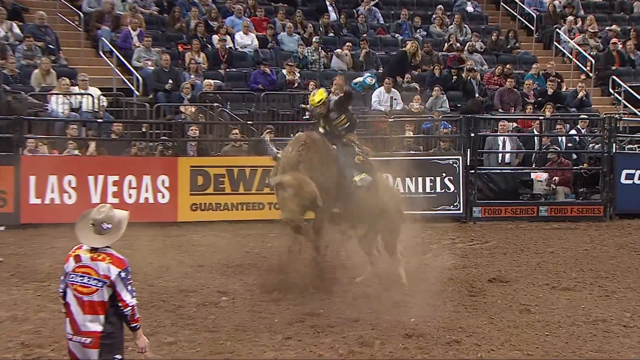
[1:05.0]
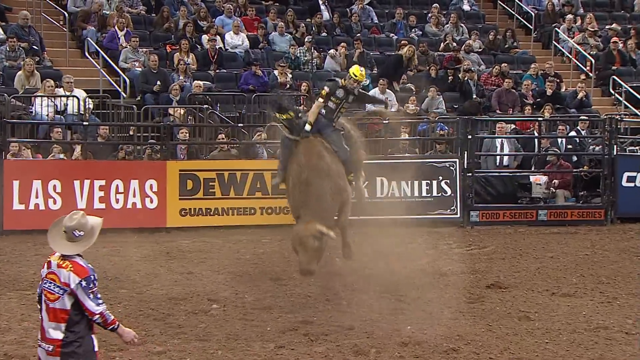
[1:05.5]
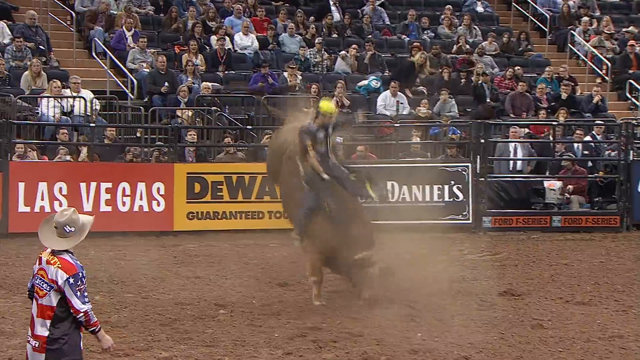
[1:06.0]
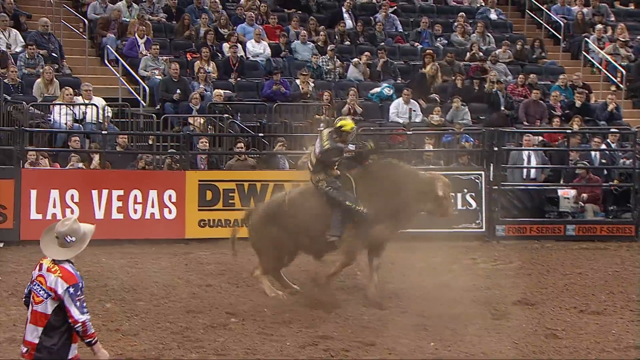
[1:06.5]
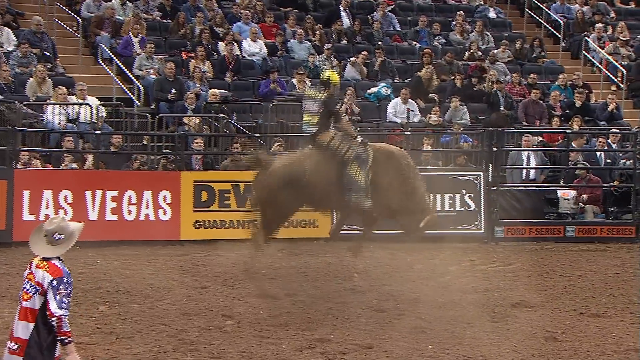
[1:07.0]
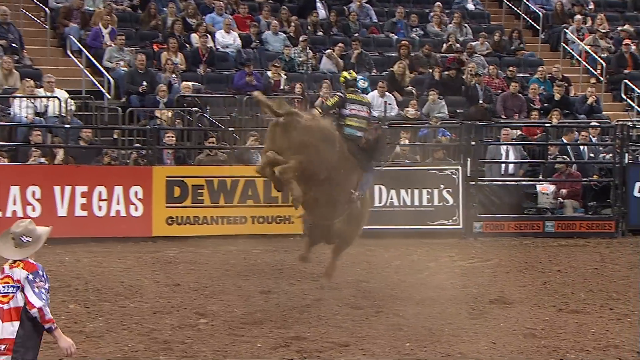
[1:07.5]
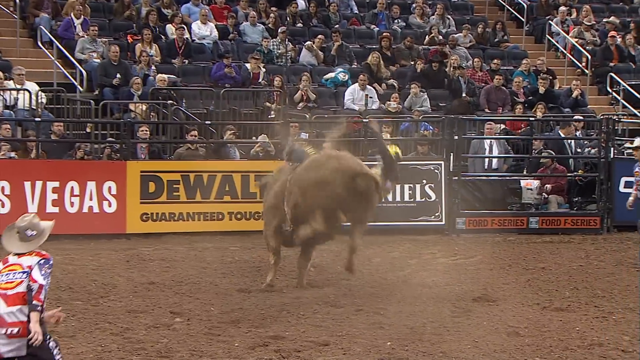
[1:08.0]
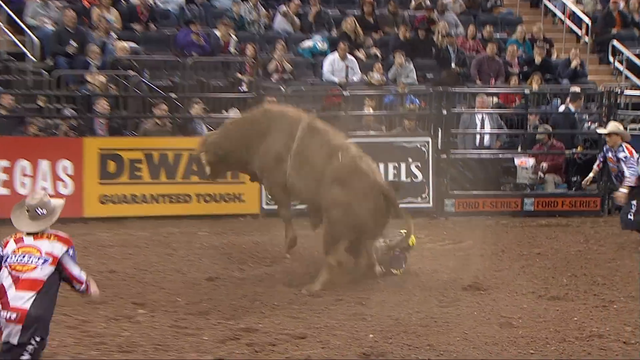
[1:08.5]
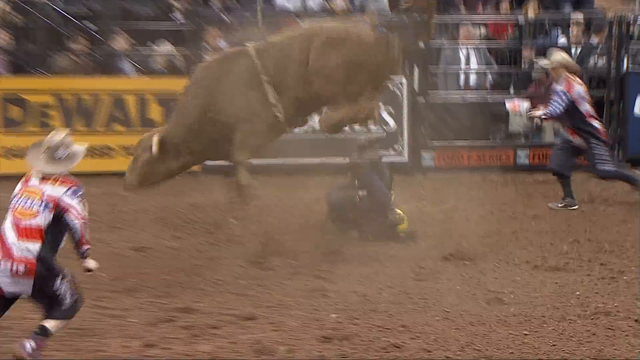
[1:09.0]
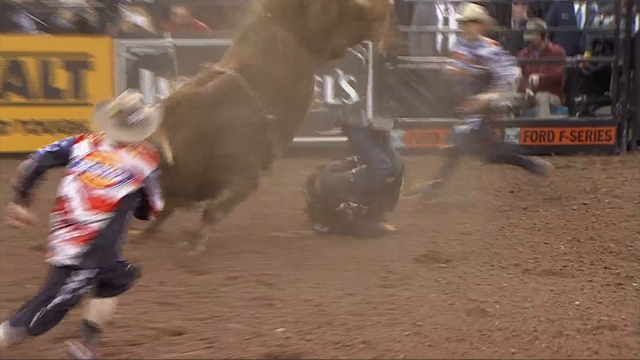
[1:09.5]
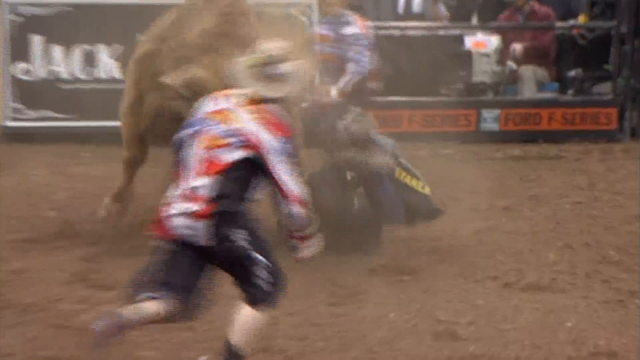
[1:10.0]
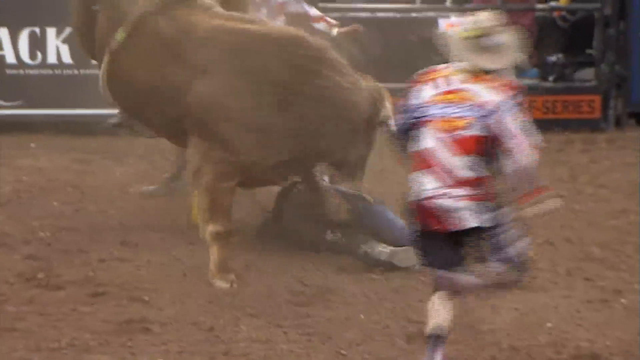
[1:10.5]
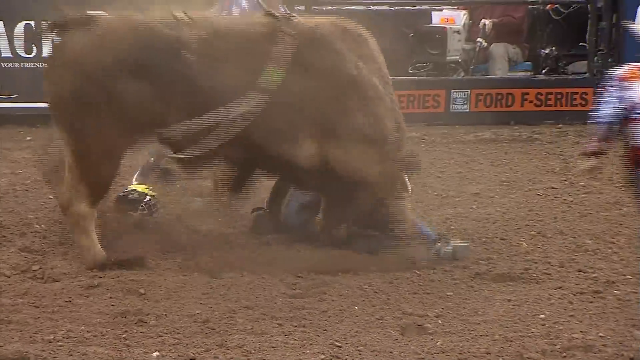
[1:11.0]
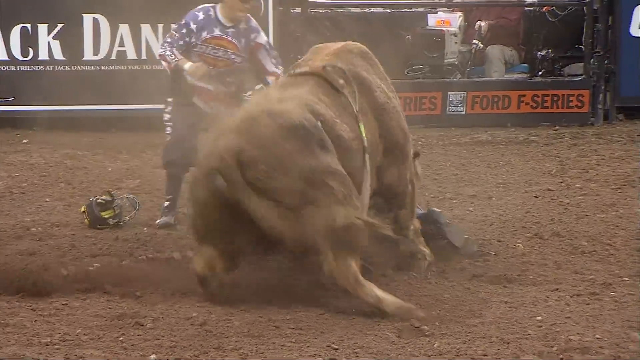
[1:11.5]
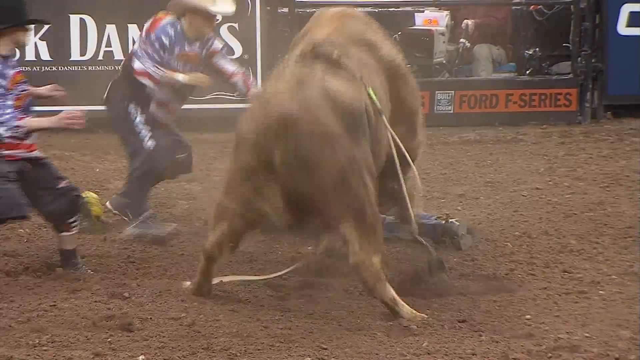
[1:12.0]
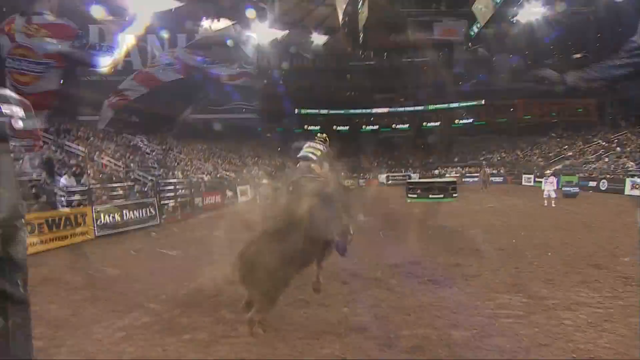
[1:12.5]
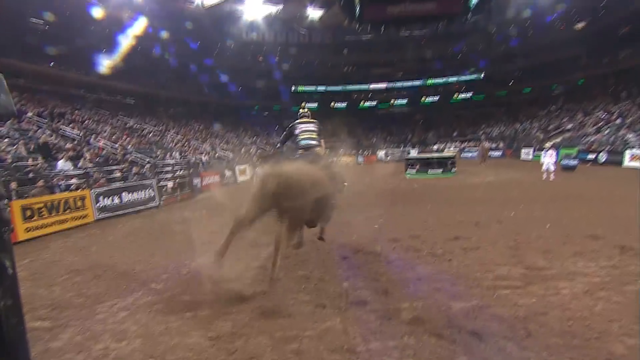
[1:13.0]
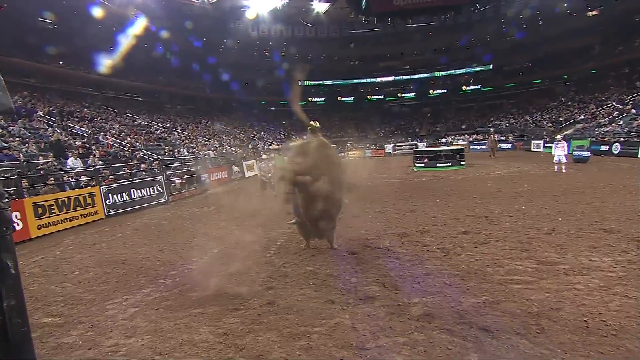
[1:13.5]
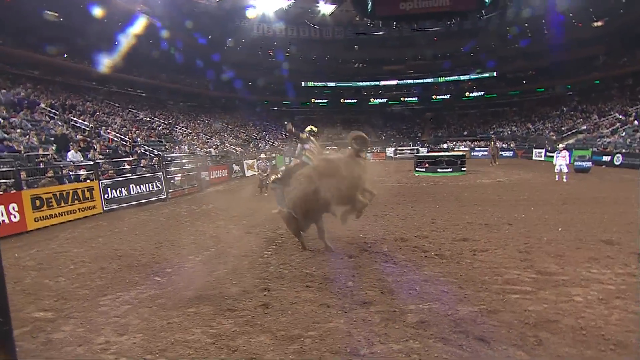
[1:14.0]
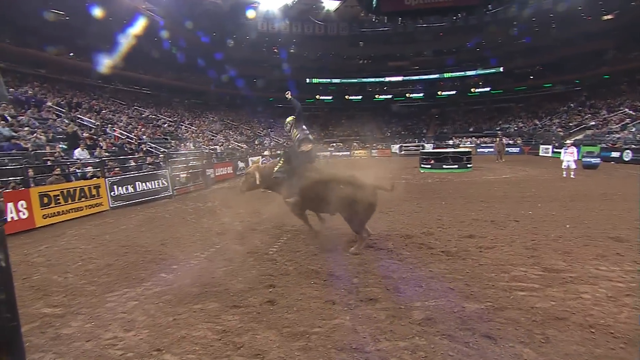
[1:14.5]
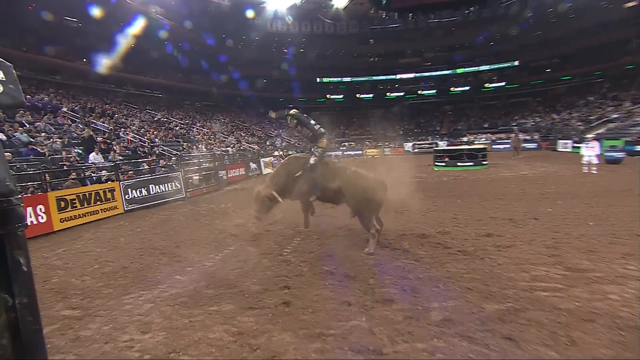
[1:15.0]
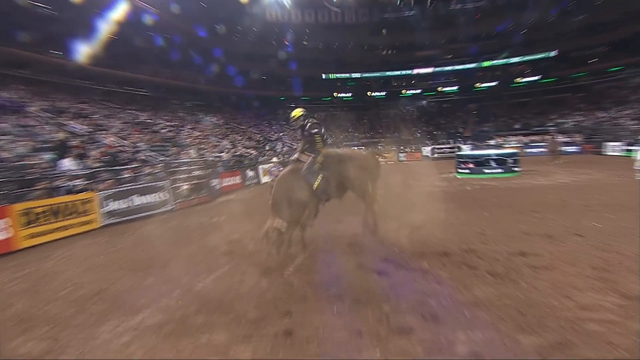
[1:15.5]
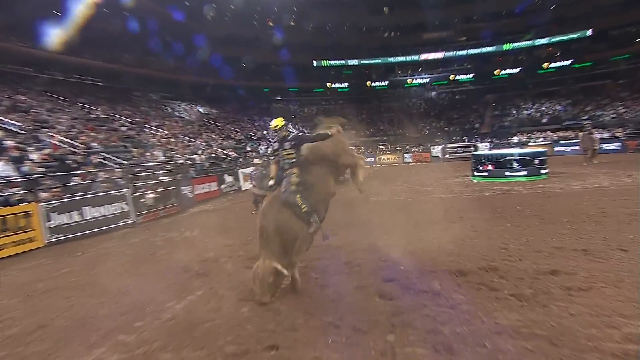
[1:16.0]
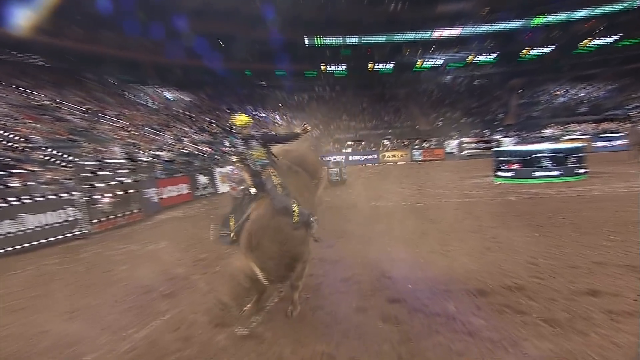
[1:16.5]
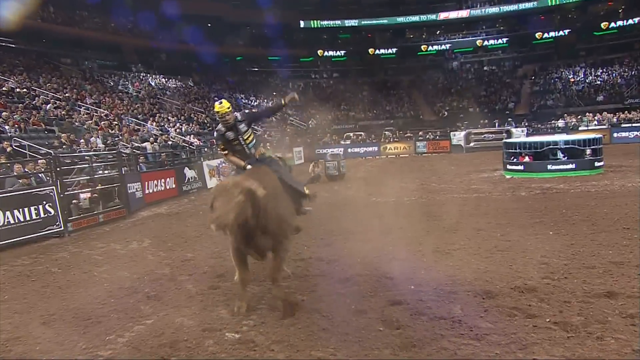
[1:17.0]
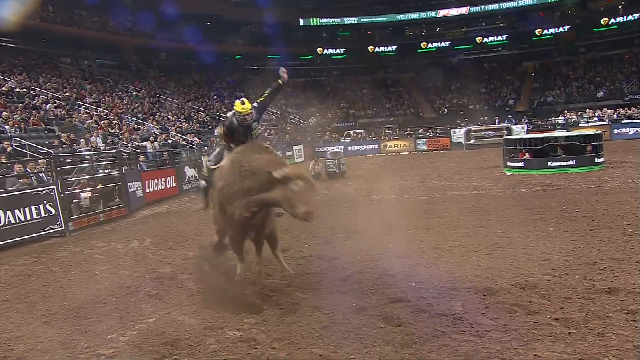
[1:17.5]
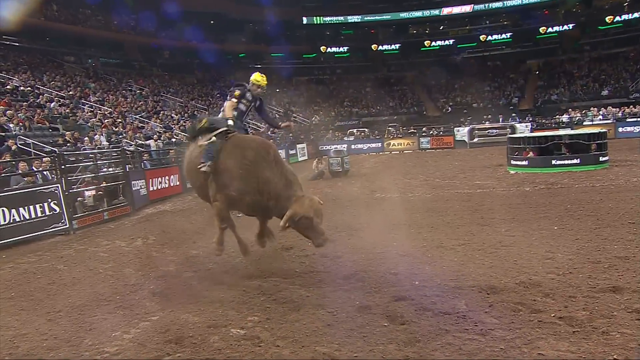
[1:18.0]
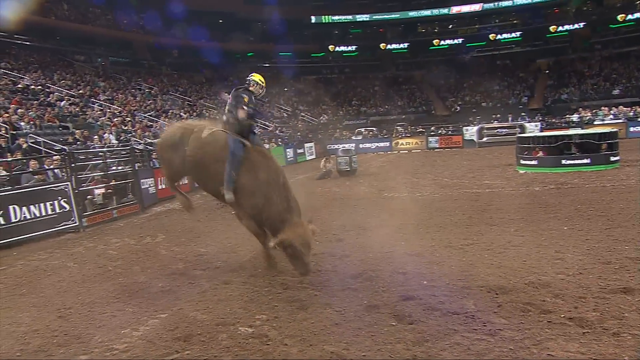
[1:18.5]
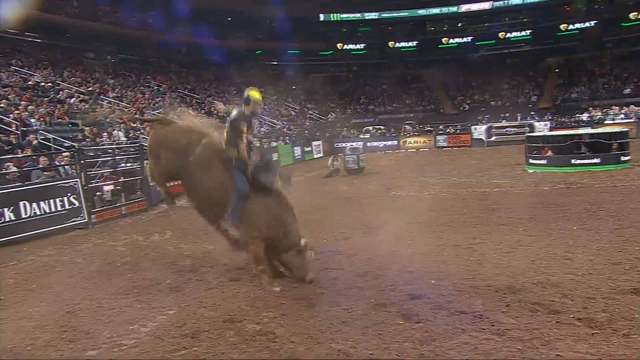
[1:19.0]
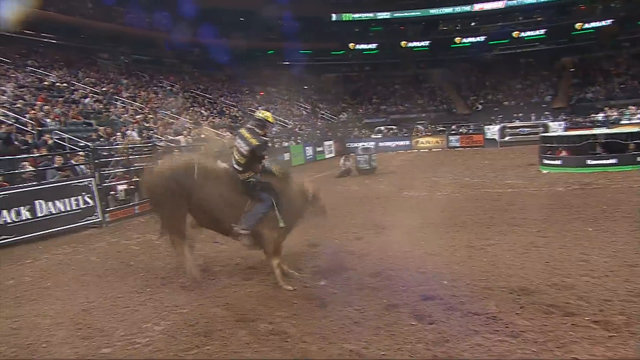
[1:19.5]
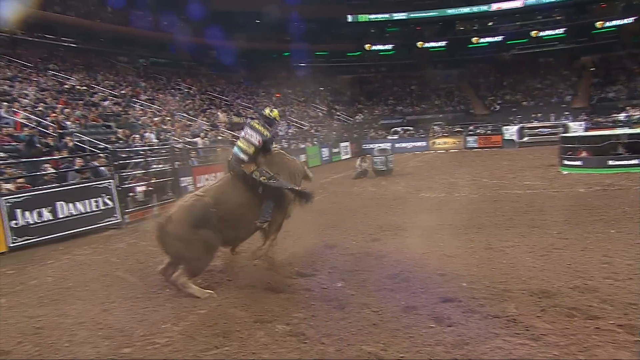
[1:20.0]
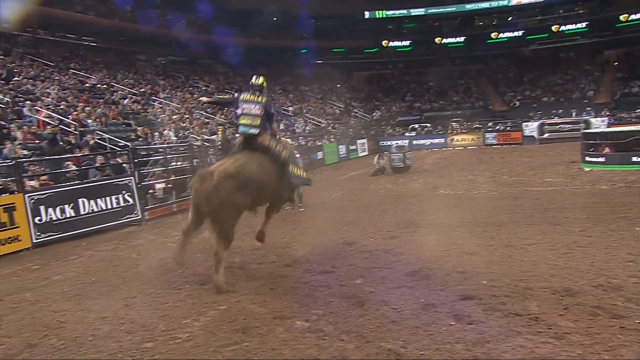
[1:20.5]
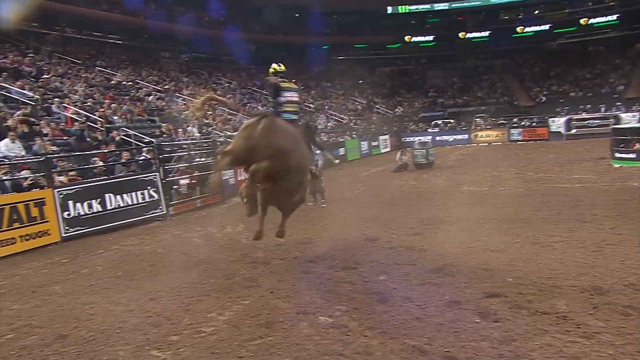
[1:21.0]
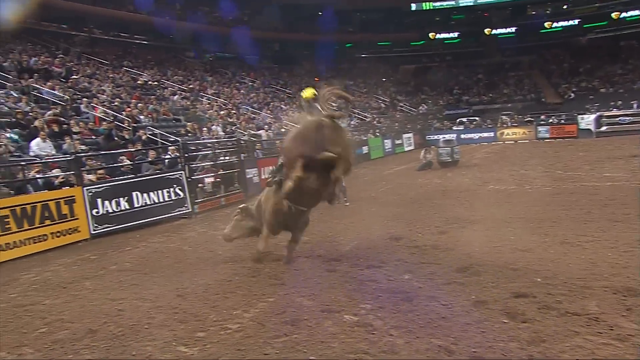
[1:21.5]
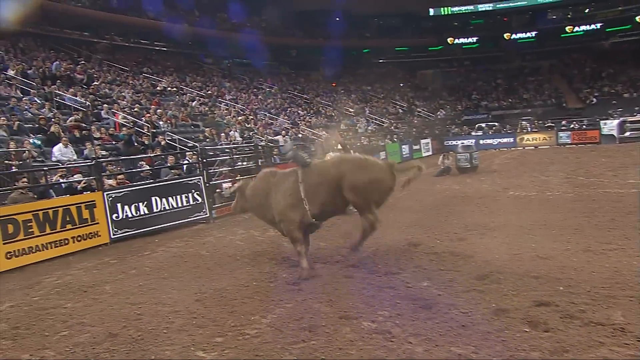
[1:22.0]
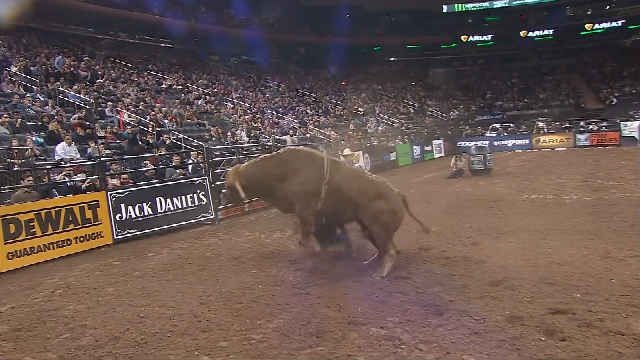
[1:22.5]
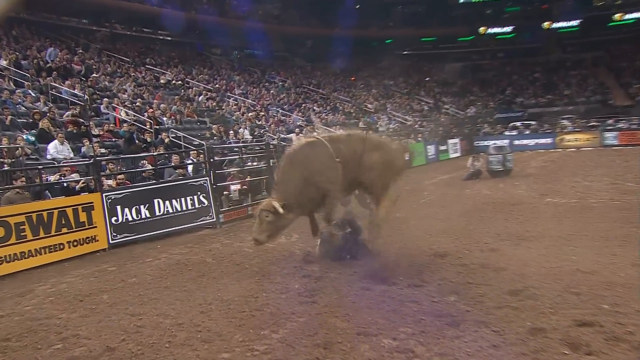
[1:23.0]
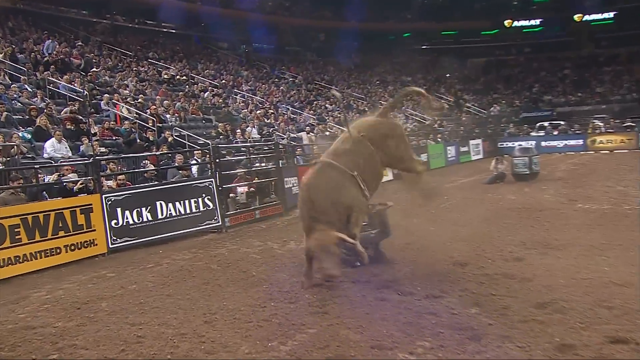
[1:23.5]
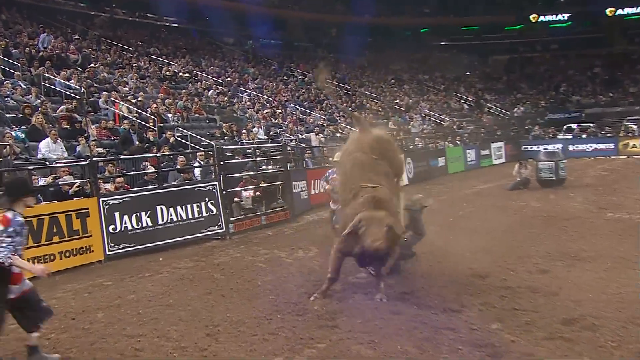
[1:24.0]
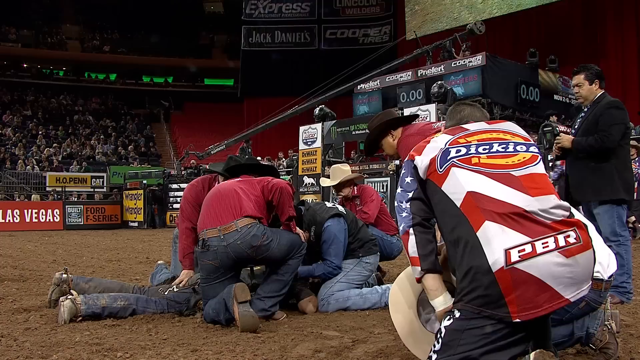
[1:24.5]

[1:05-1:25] The replay of the man riding the bull continues in slow motion. It shows the man falling off and landing hard on his back, which makes him roll over from the momentum. The bull then attempts to gore him, though its horns have been shaved. It looks as though the bull may also have stepped on the rider while he was on the floor, but this is unclear from the angles shown. The scene then returns to the medical team, who continue to huddle around the rider and treat him.